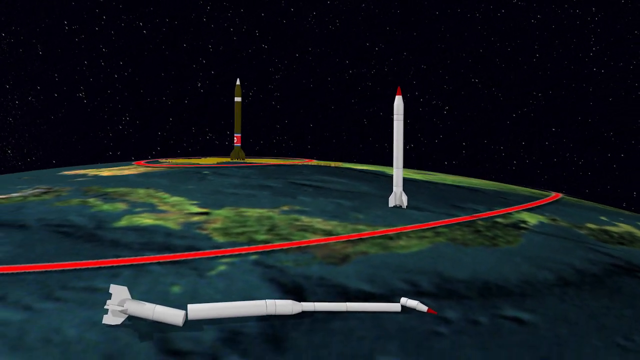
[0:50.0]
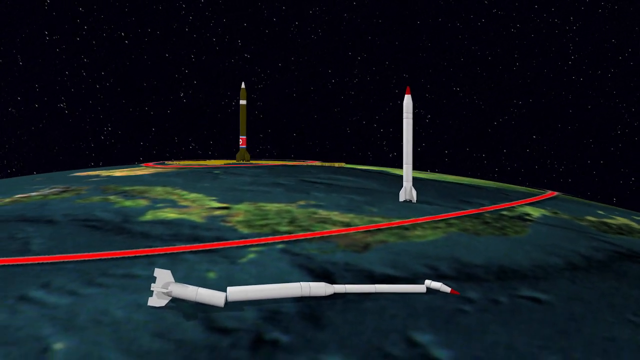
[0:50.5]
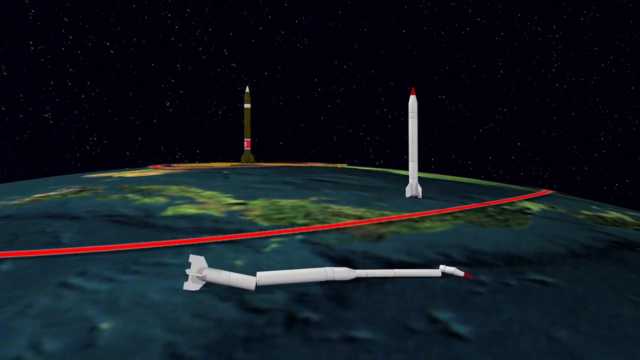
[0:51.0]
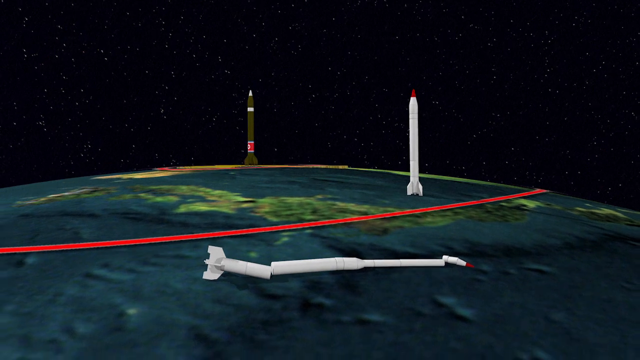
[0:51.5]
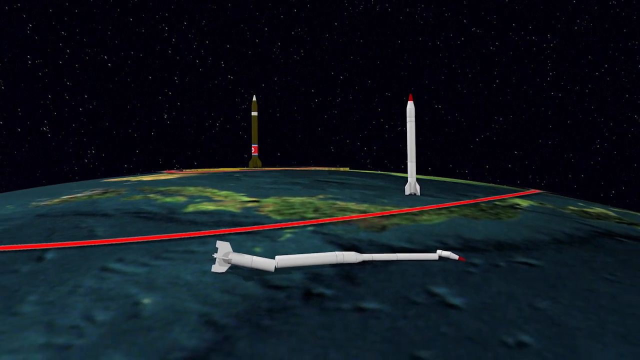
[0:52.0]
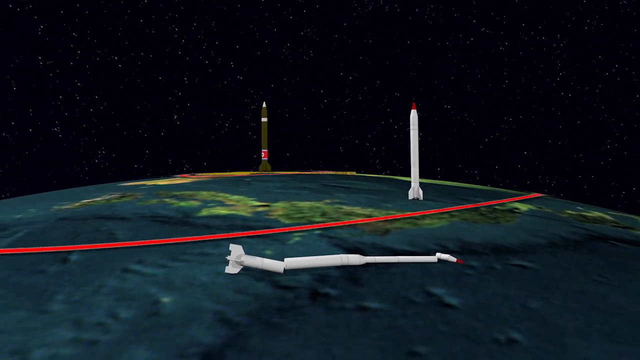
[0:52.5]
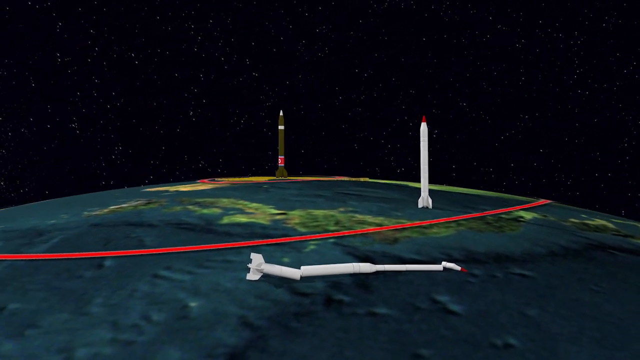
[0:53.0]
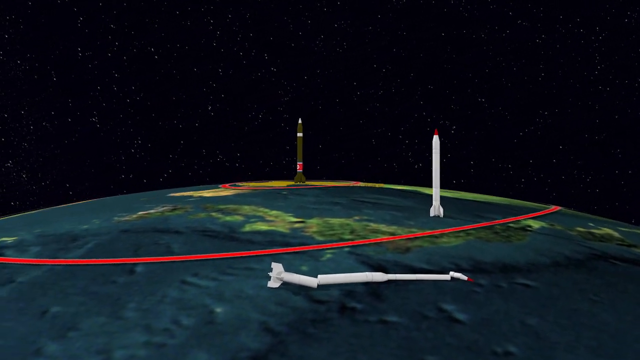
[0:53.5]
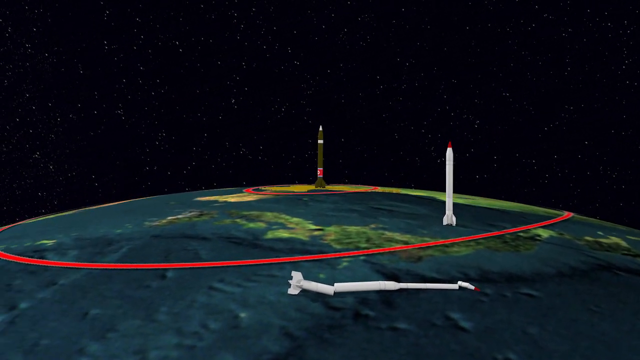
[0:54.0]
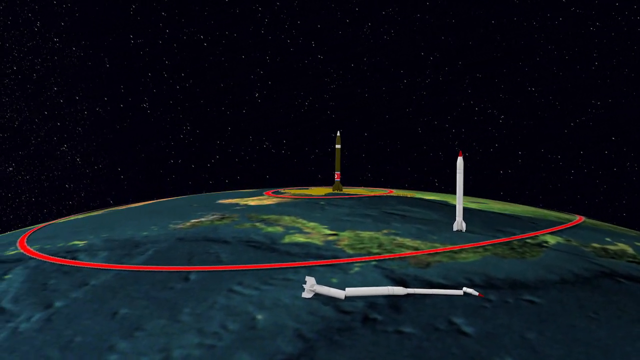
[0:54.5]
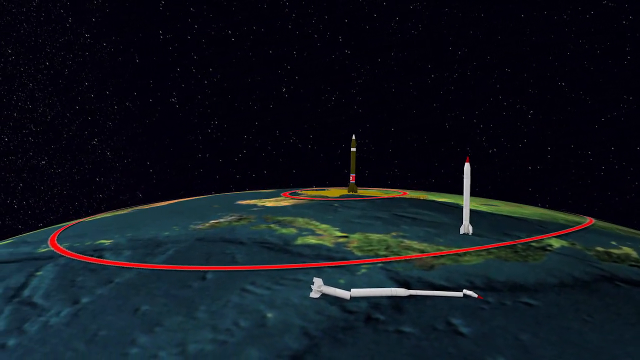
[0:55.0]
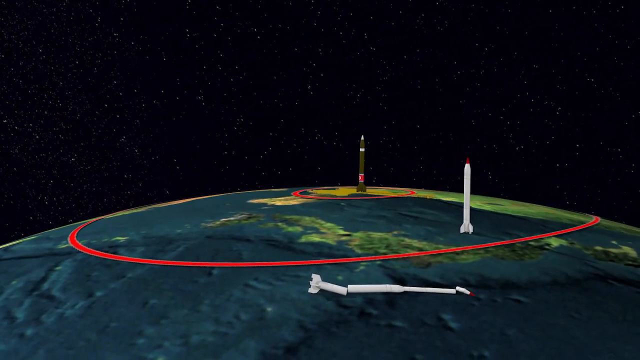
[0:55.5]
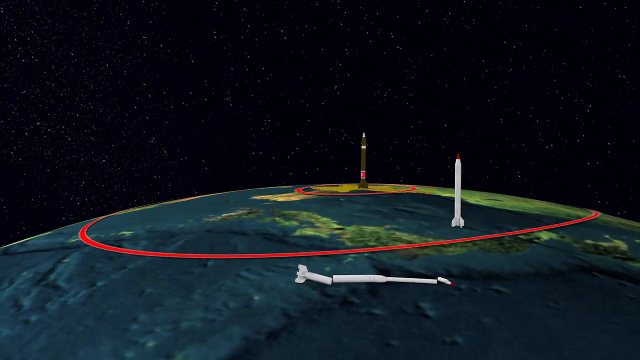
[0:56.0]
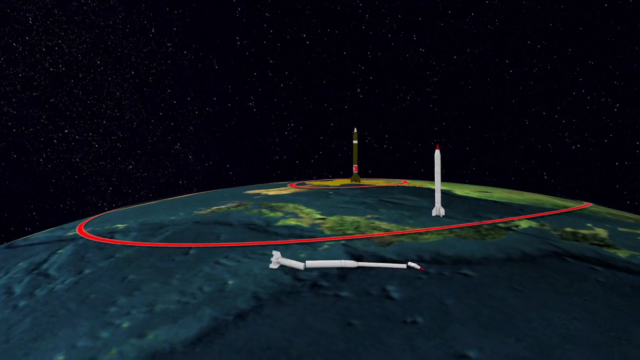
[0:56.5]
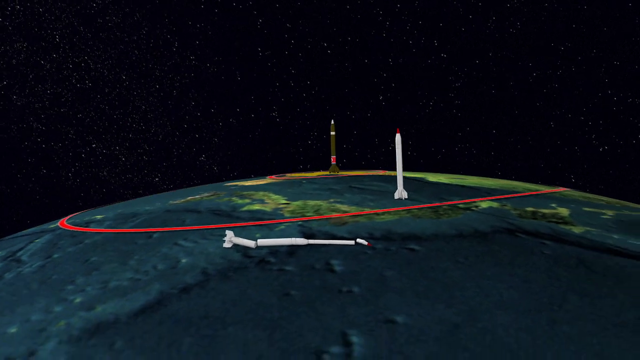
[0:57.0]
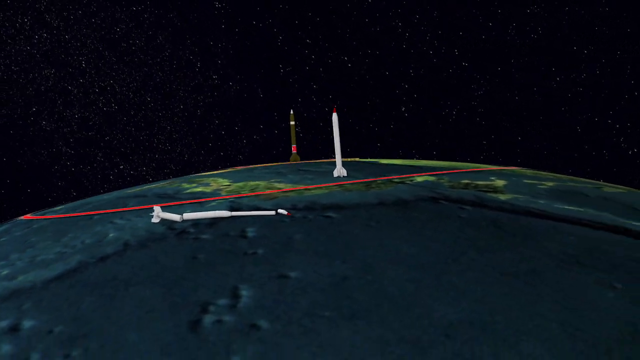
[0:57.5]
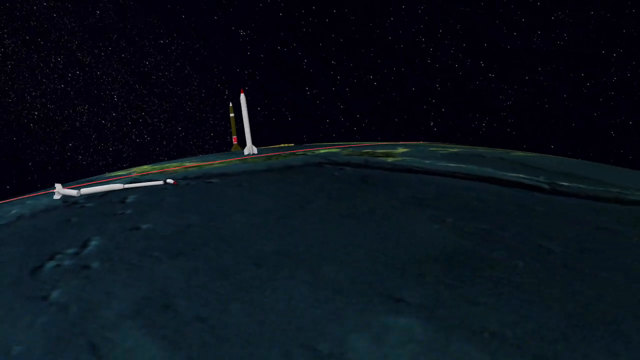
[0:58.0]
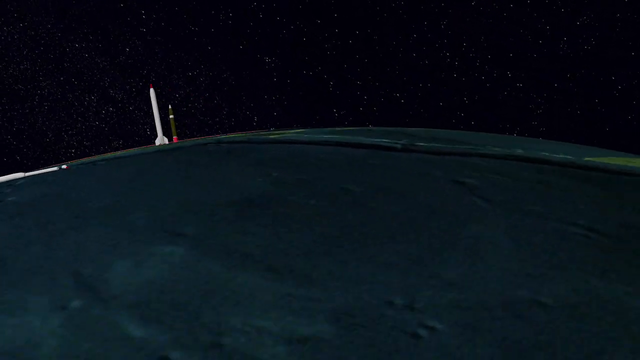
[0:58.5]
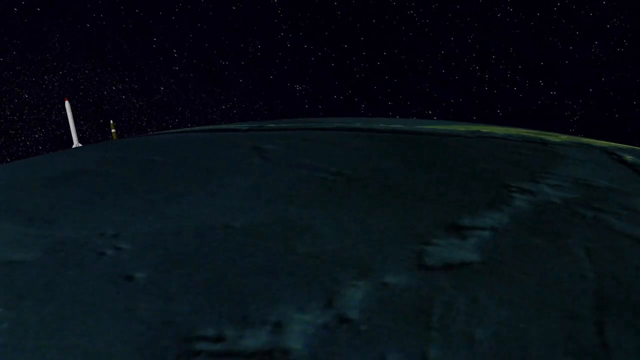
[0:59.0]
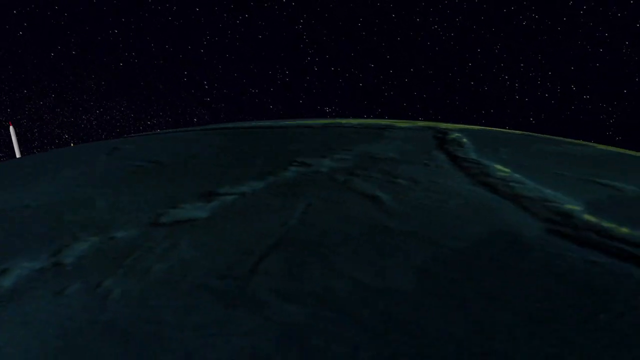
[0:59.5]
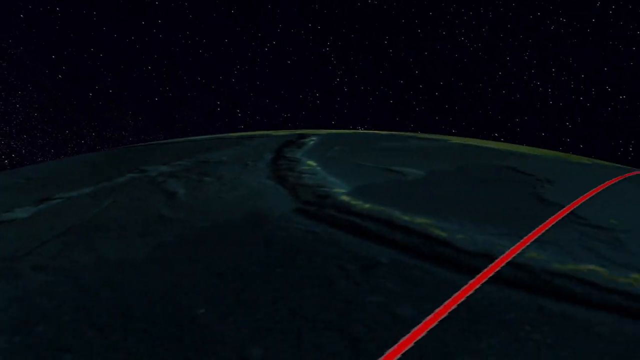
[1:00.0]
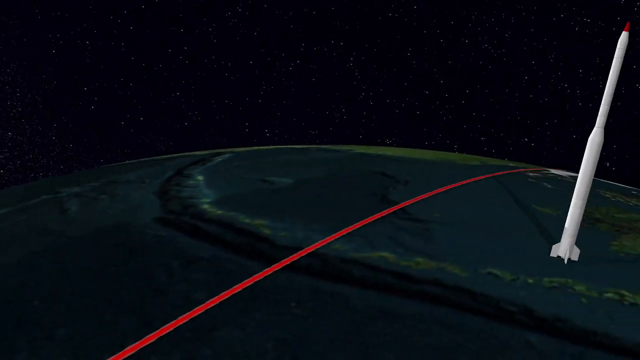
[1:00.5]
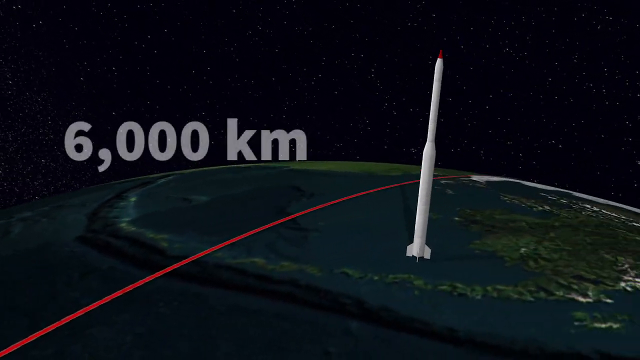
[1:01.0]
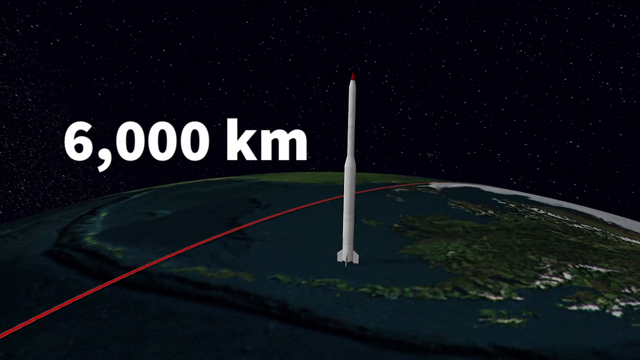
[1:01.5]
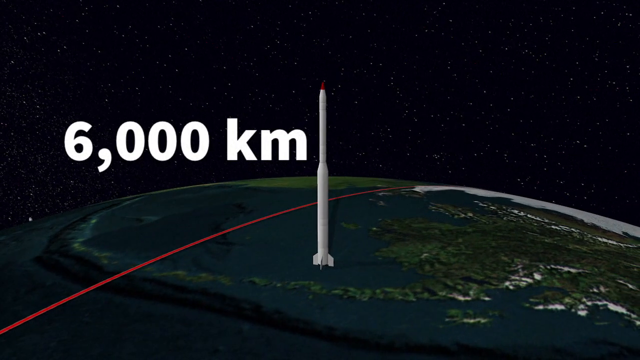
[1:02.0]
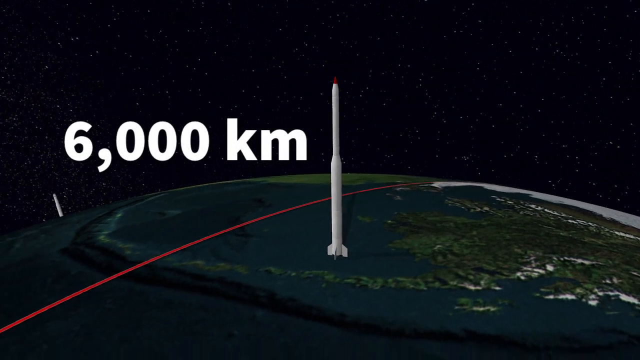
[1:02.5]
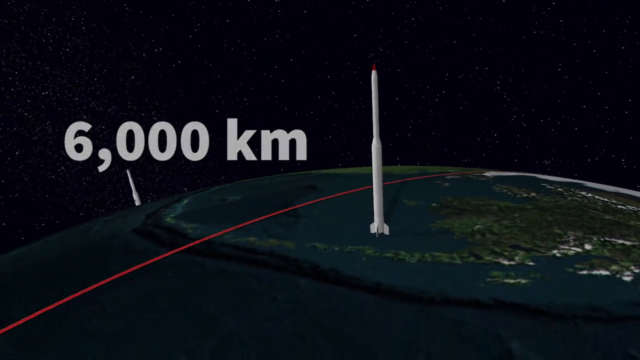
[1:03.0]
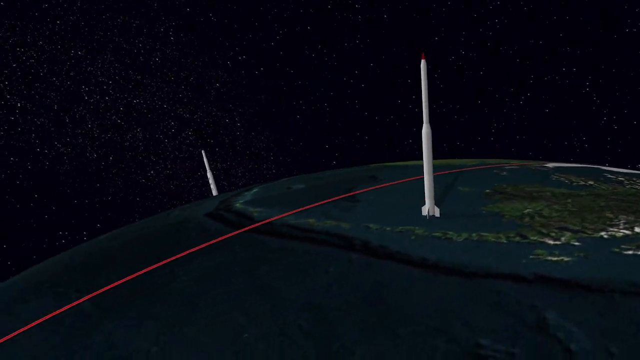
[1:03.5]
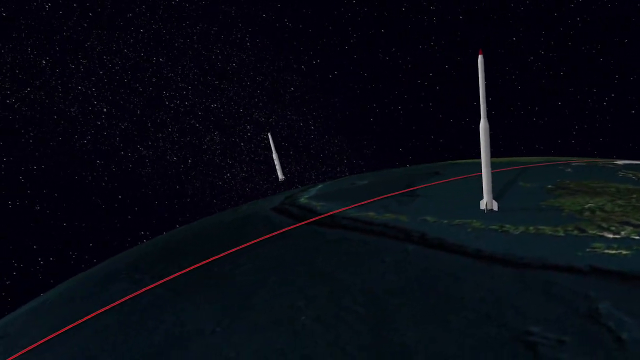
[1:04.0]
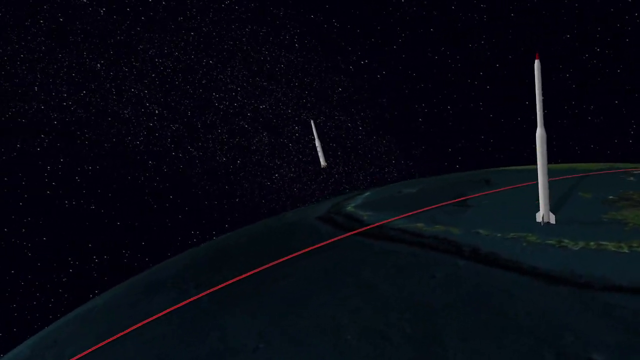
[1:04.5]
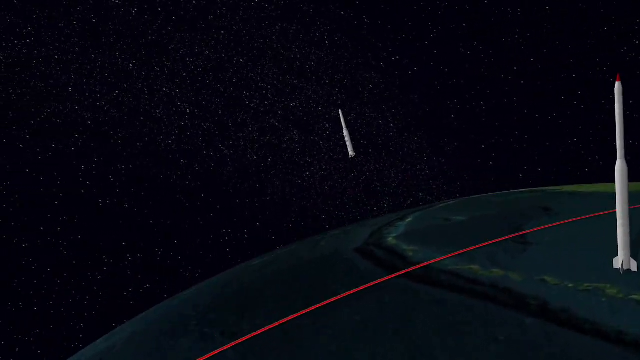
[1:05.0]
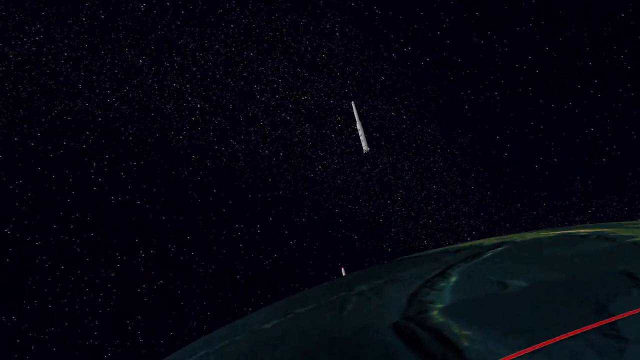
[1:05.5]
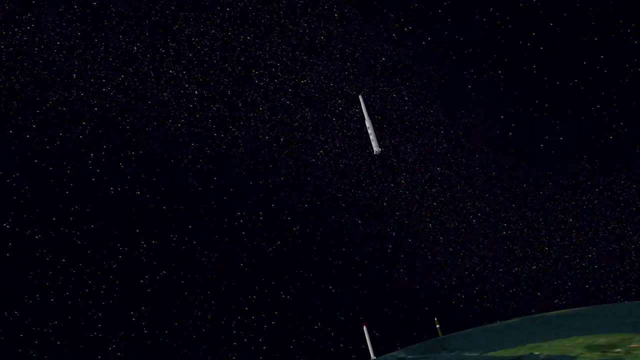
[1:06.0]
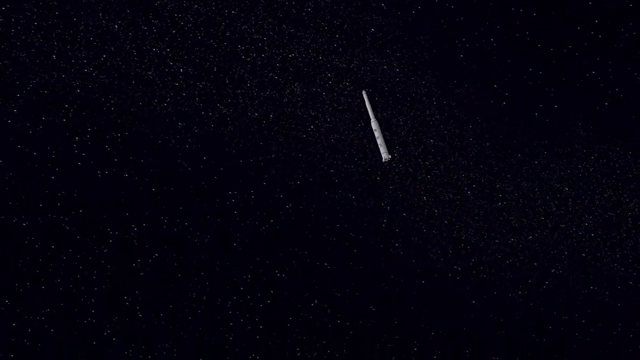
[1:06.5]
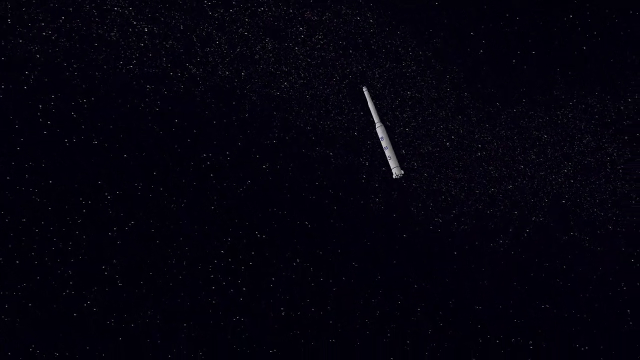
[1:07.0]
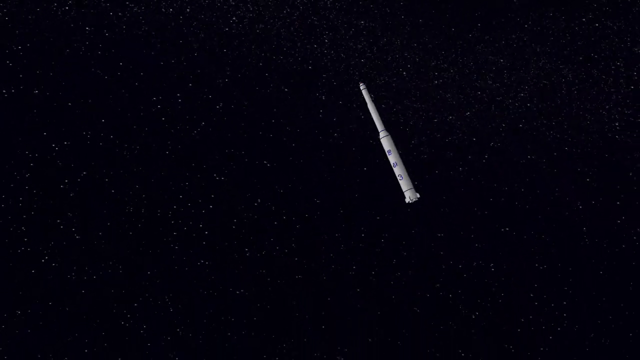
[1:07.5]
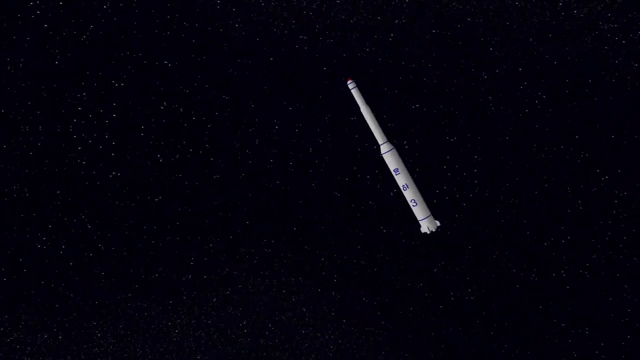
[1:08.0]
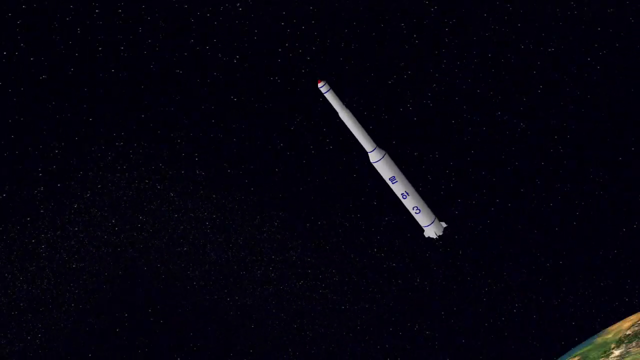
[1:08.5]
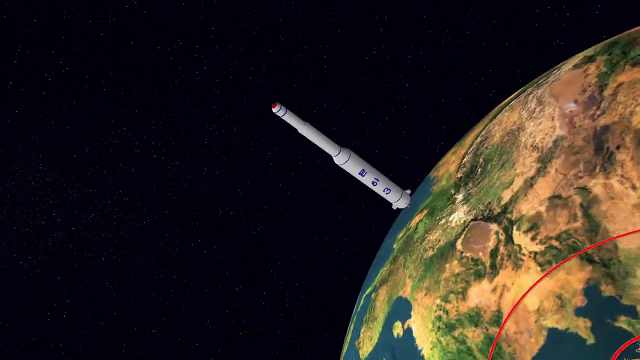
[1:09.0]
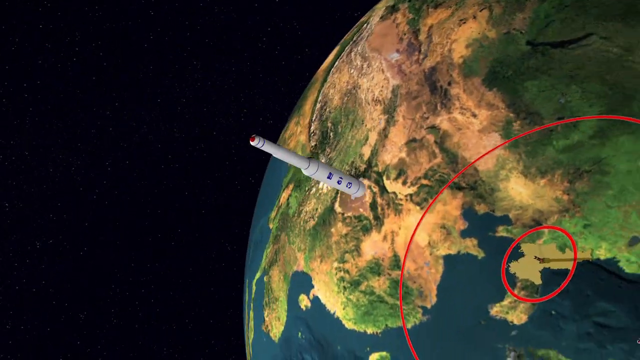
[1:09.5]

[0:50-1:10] Outside the 1,300-kilometer red circle there is a broken white rocket. The map shows a circle surrounding North Korea and a red circle further out that surrounds North Korea, all of South Korea, Japan and China in general. The camera goes around the globe, showing a white rocket at 6,000 kilometers, whose range surrounds much of the globe. One of the rockets takes off into the sky, floating. A top view shows a round circle and a larger round circle, encircling all of Korea and some of China. The rocket goes straight up into the air, and the camera follows it.